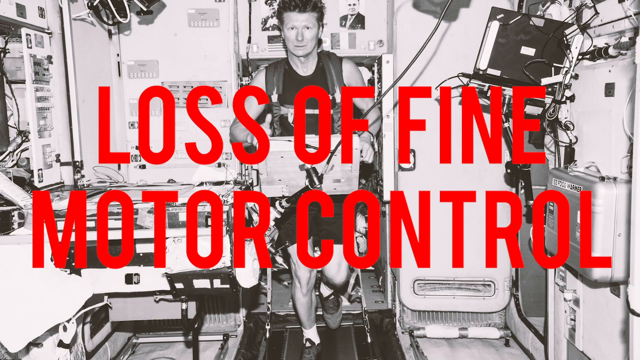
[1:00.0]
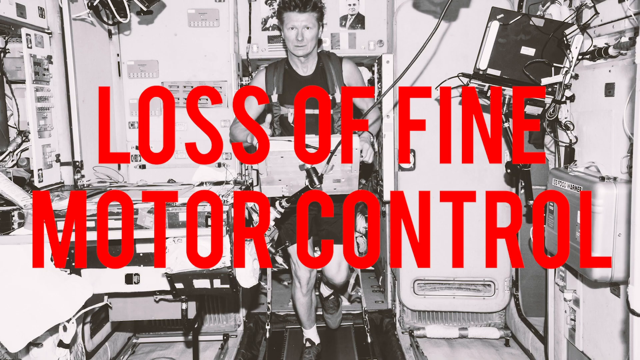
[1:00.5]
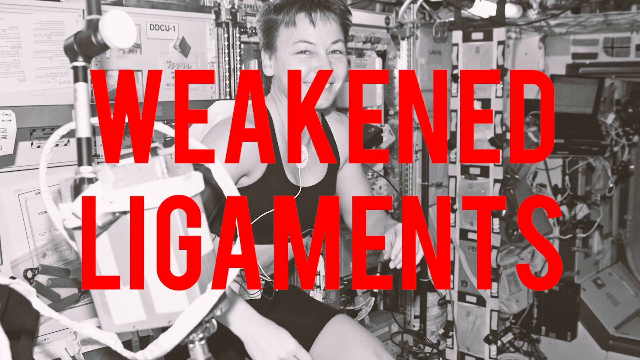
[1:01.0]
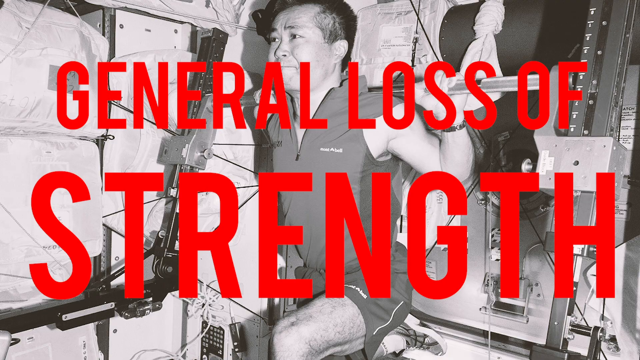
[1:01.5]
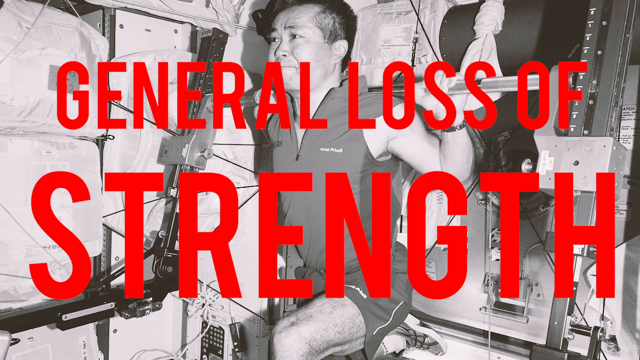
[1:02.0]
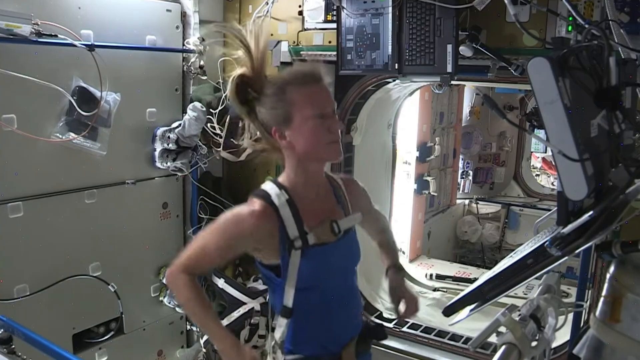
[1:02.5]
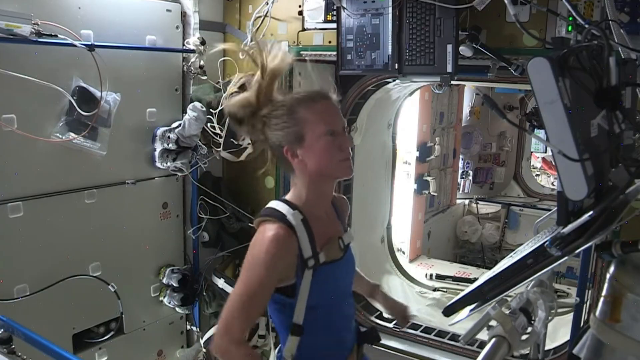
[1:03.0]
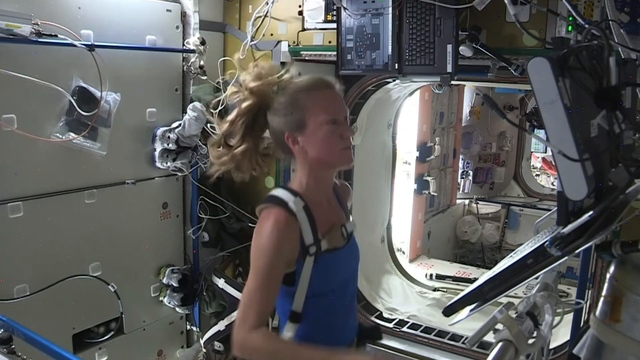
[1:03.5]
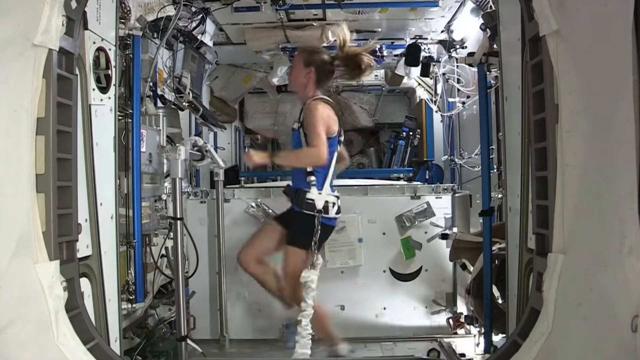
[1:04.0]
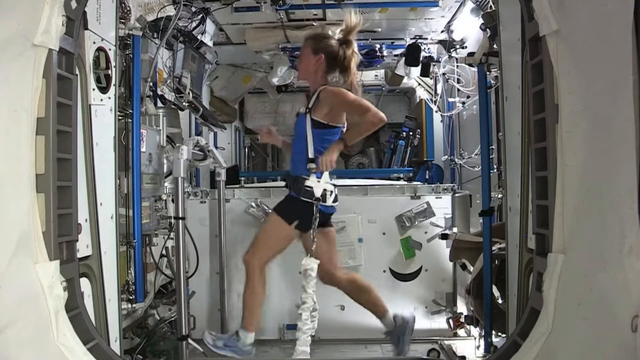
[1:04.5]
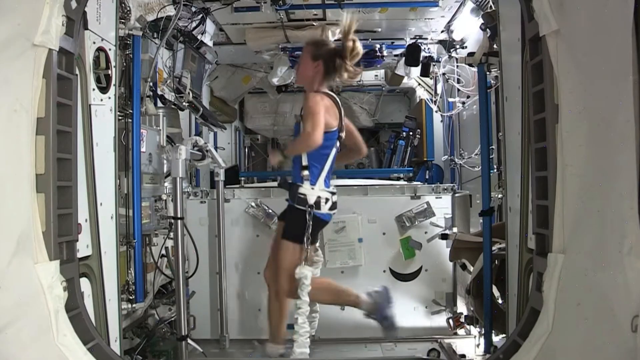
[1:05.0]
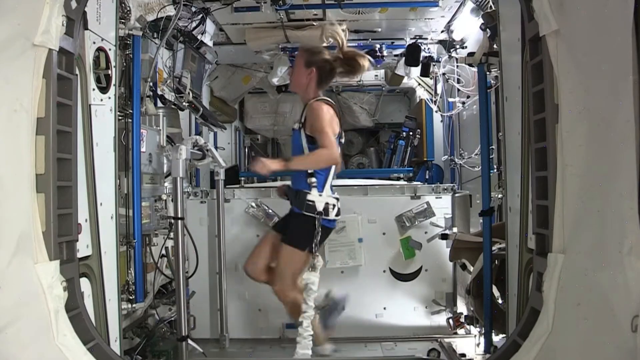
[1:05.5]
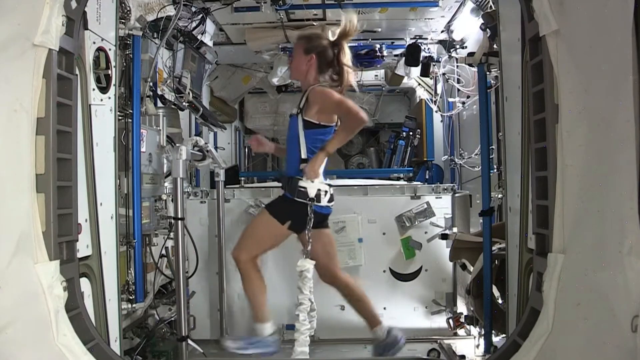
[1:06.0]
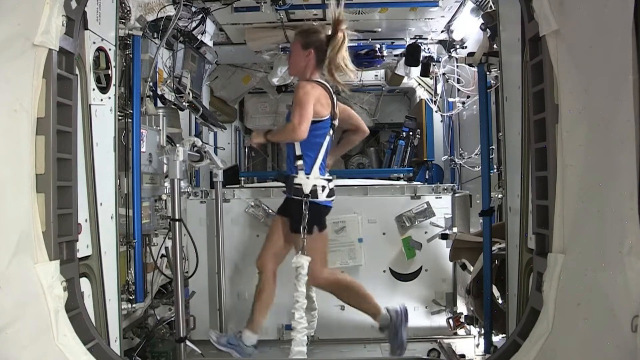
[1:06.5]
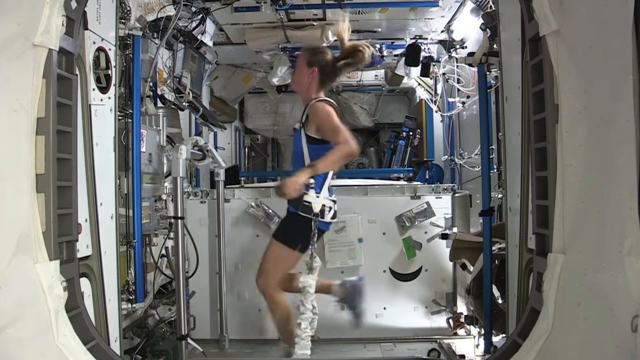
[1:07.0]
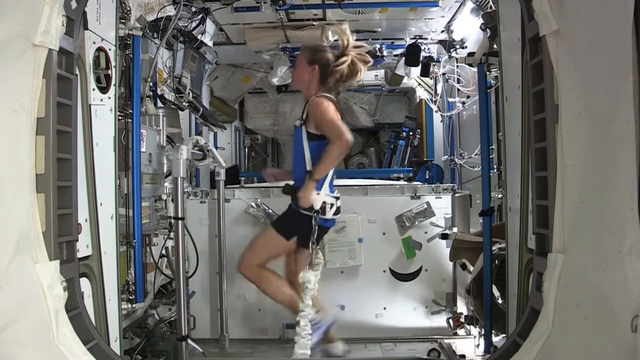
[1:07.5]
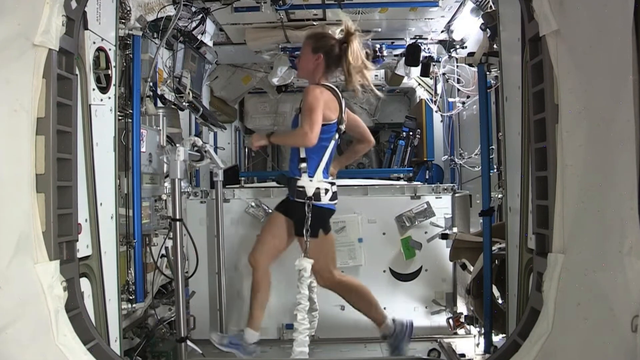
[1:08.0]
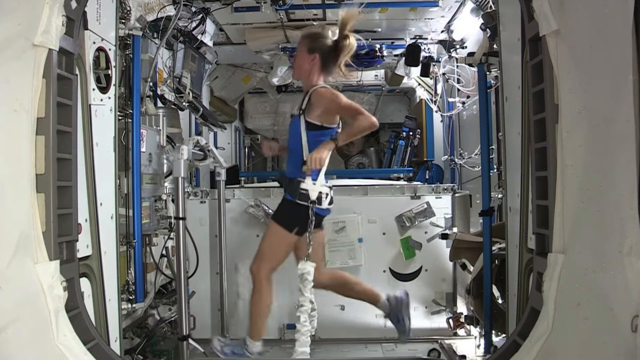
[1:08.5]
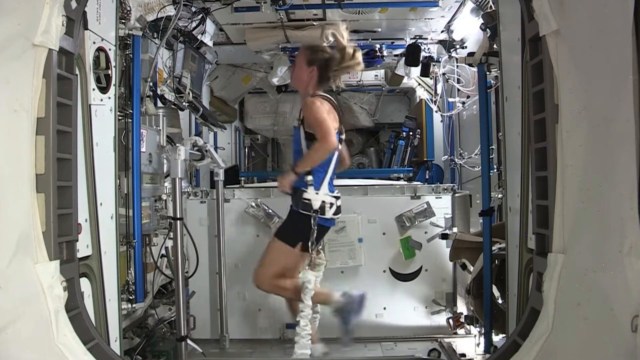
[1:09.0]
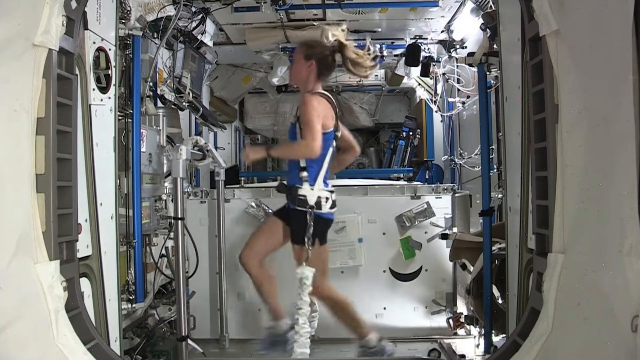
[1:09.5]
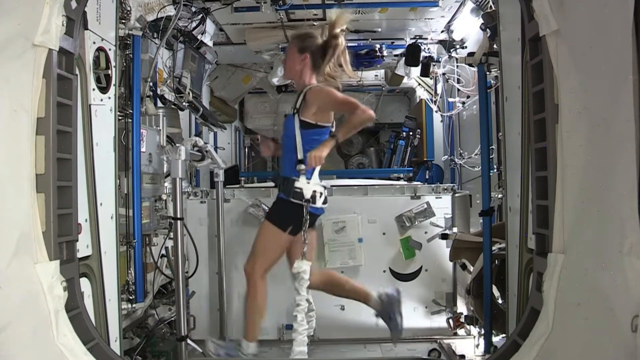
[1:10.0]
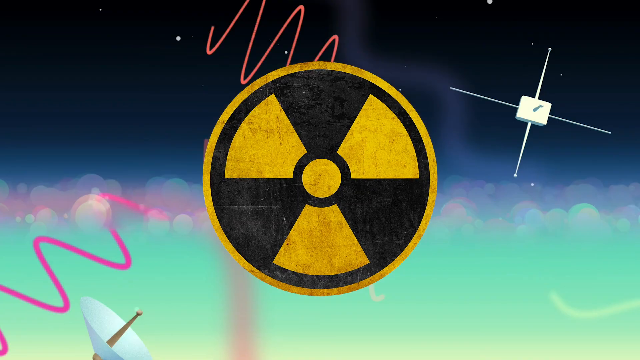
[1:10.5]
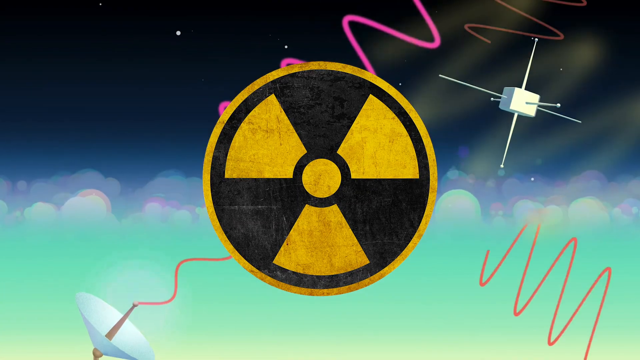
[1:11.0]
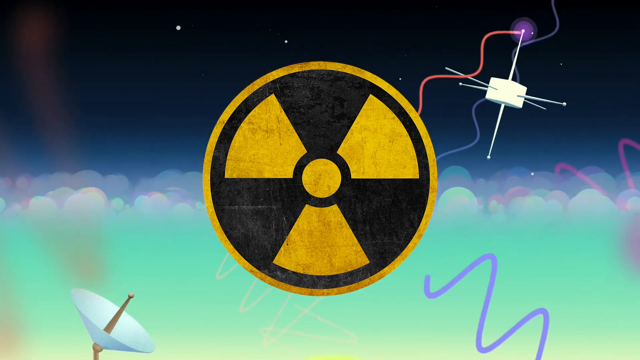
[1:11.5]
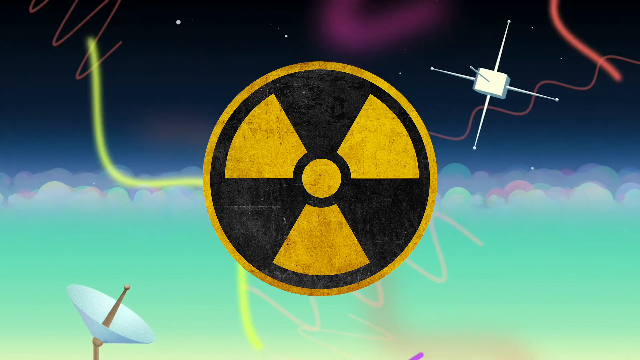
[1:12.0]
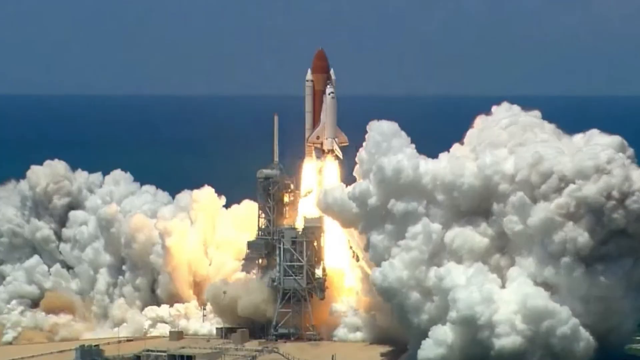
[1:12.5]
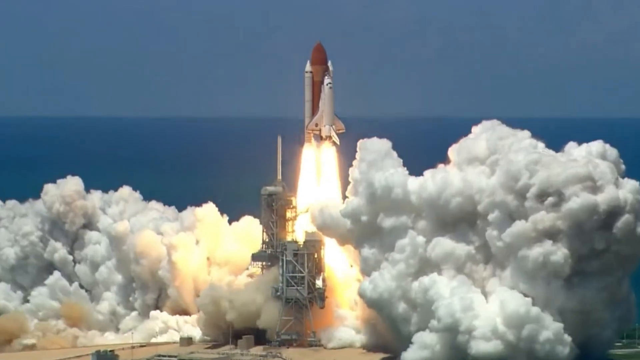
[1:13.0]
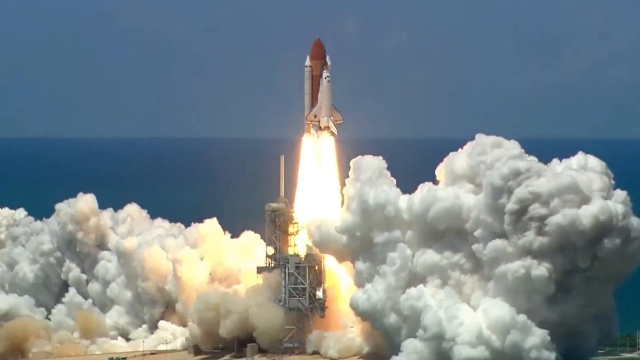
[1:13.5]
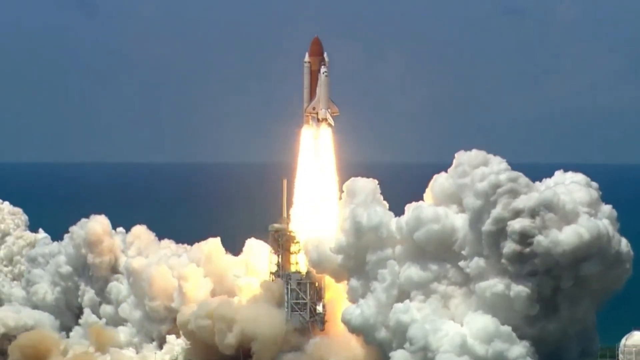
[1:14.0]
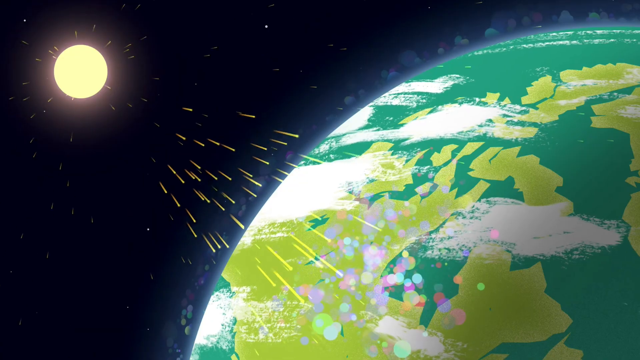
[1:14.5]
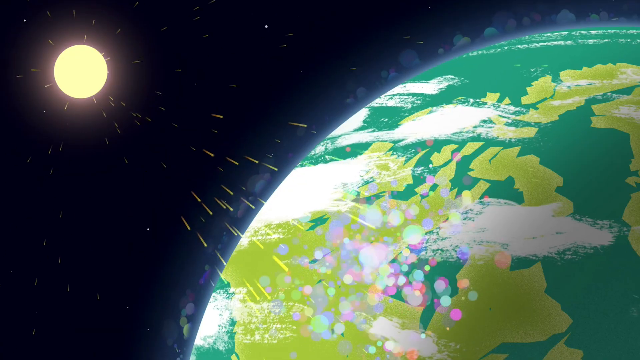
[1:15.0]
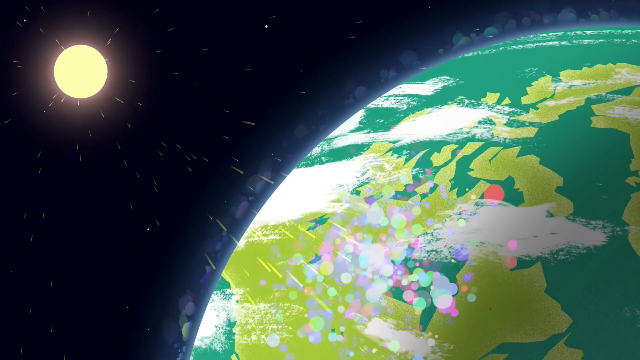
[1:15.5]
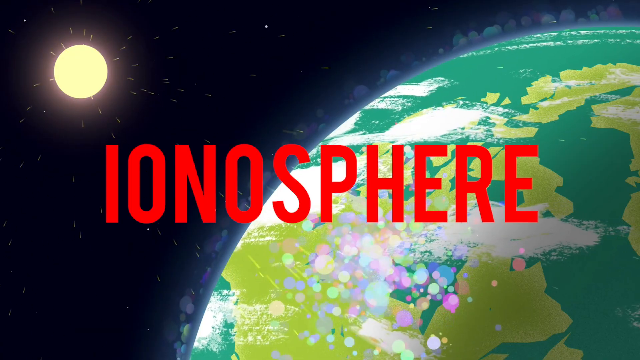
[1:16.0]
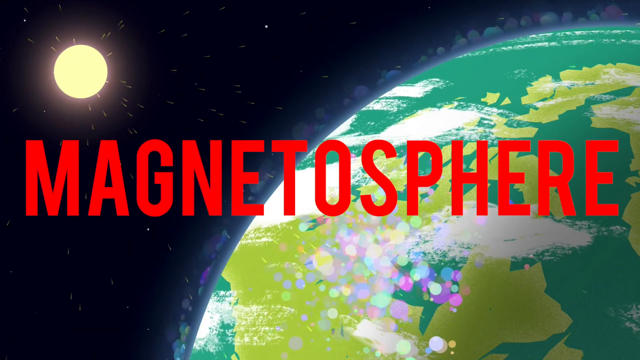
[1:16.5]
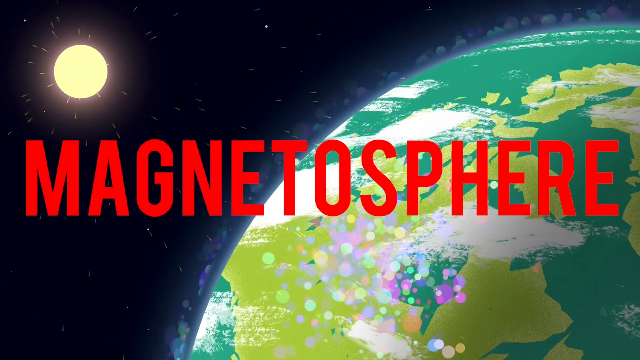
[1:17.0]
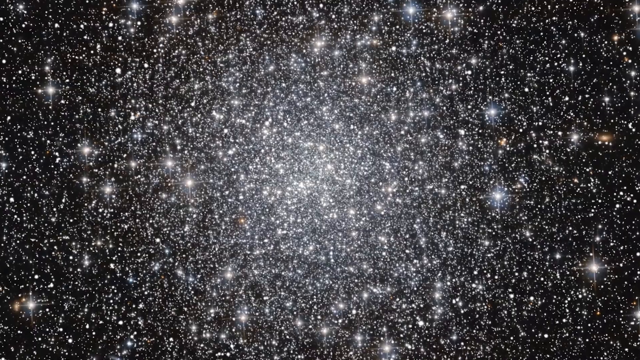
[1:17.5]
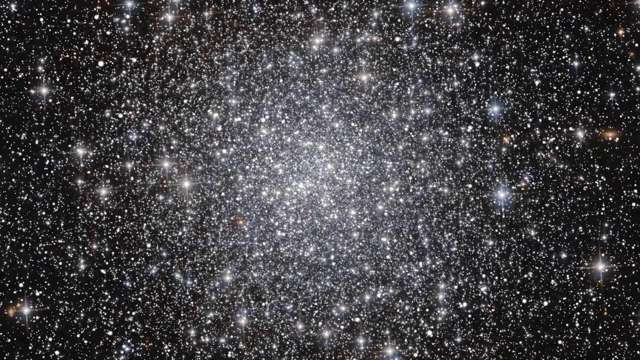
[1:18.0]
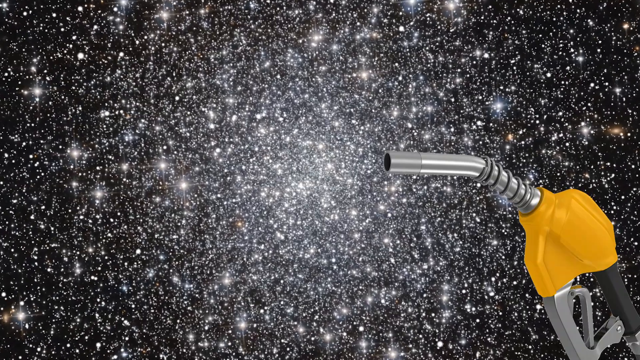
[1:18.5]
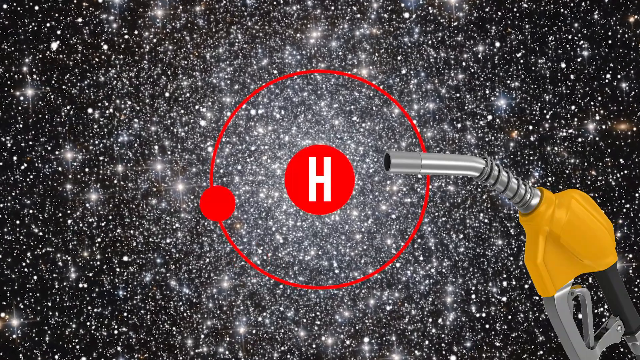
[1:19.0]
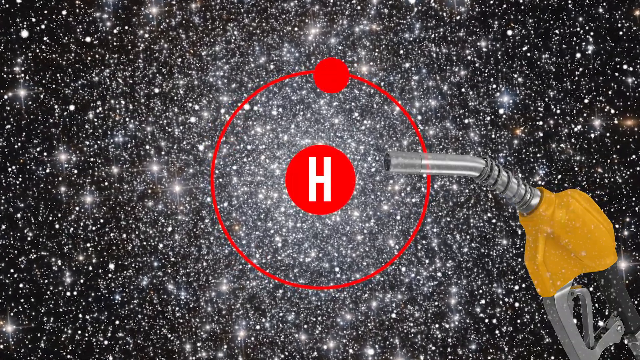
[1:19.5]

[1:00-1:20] The scenes change quickly, showing more black and white images with very large red words, now reading "general loss of strength". A woman runs on a treadmill in a space station, seen from the side, with some equipment attached to her, running at a moderate pace. The scene changes to a yellow and black caution danger sign in the center. A rocket launches from its launch pad into space. Then the sun in the top left corner emits sunlight down onto a green, yellow and white planet on the right side. A big word appears reading "IONOSPHERE", followed by the word "MAGNETOSPHERE". Many bright stars appear clustered together, with a gasoline pump on the right side and a hydrogen molecule in the middle.